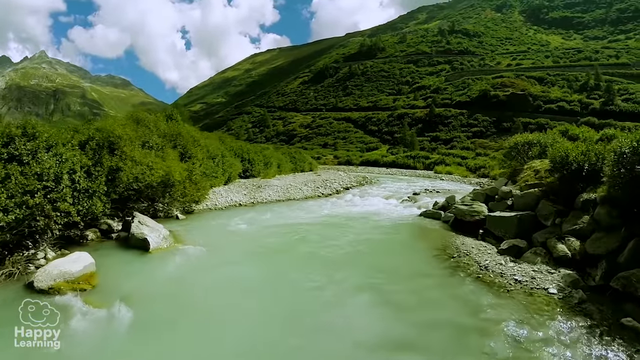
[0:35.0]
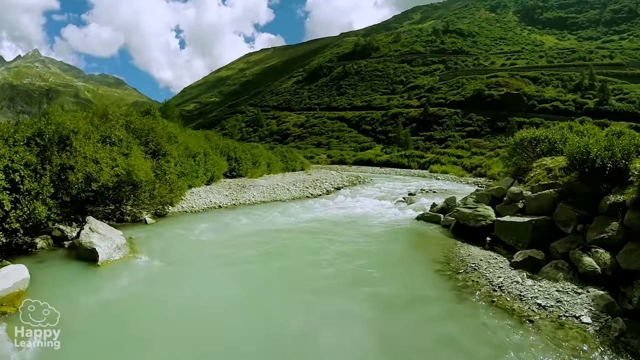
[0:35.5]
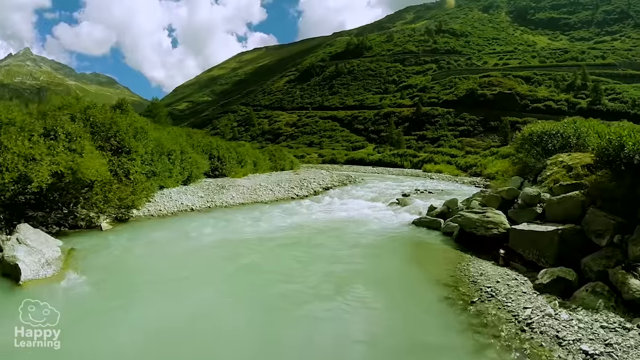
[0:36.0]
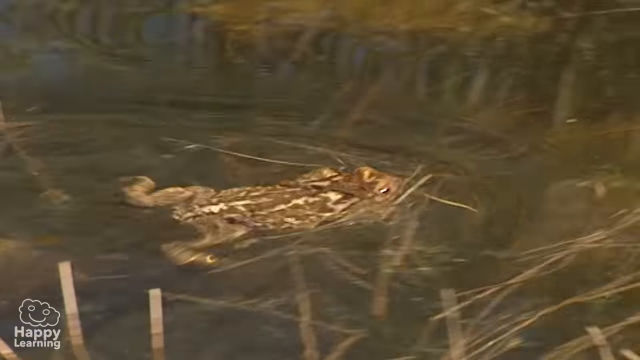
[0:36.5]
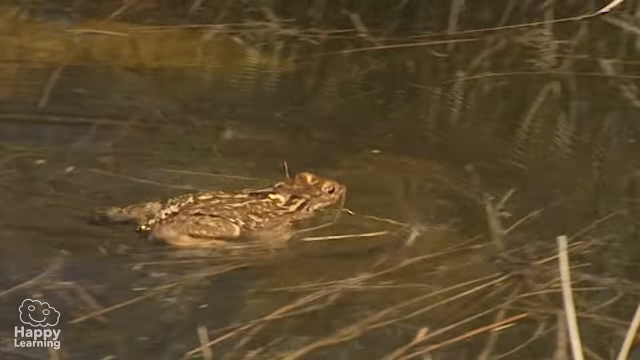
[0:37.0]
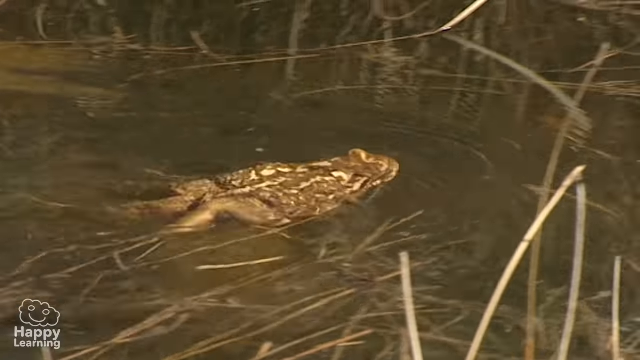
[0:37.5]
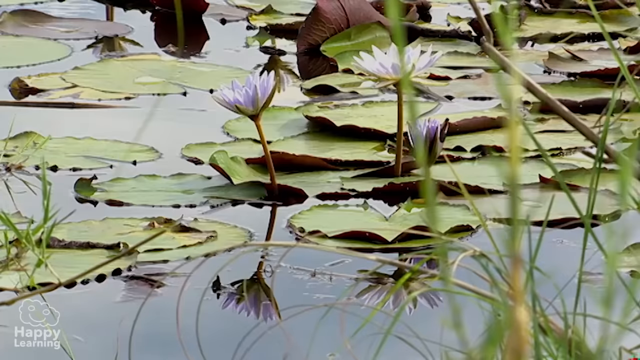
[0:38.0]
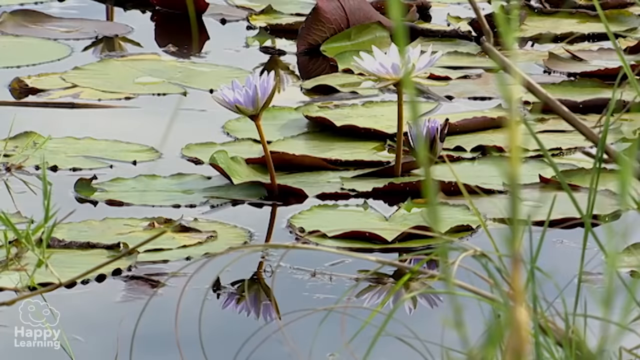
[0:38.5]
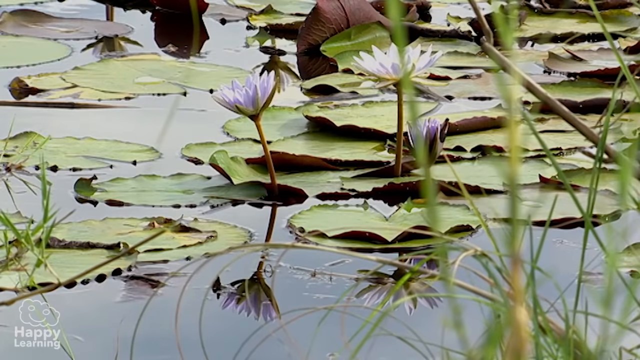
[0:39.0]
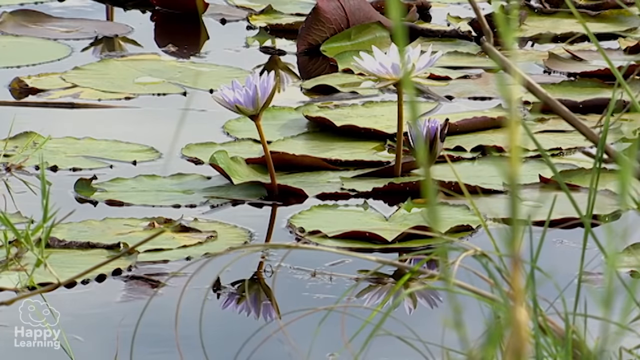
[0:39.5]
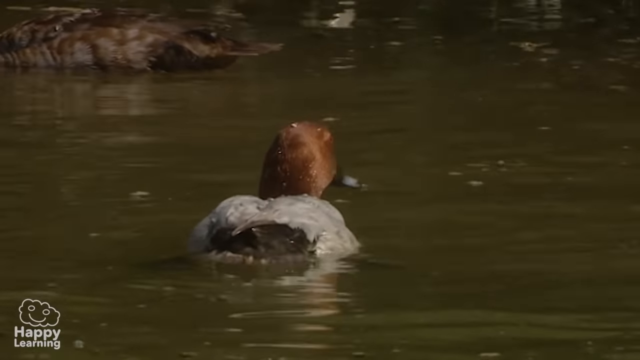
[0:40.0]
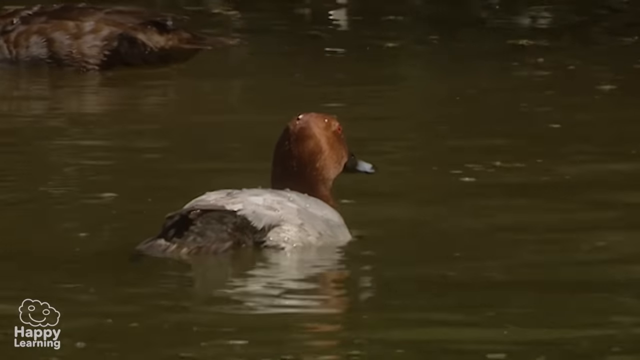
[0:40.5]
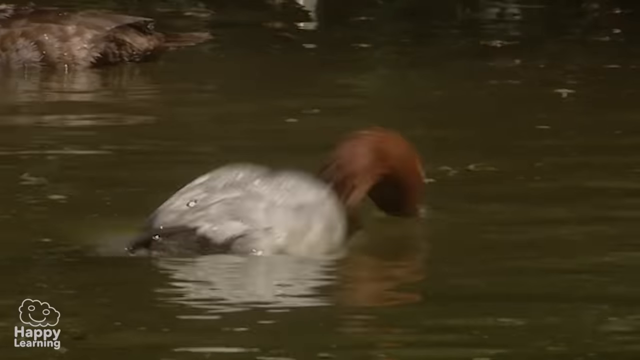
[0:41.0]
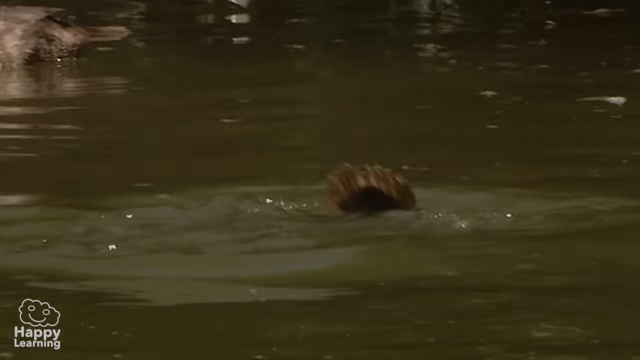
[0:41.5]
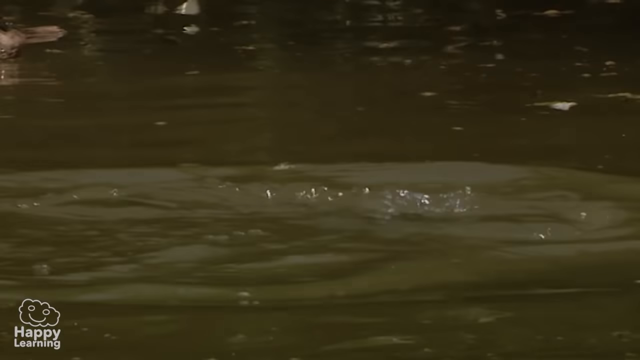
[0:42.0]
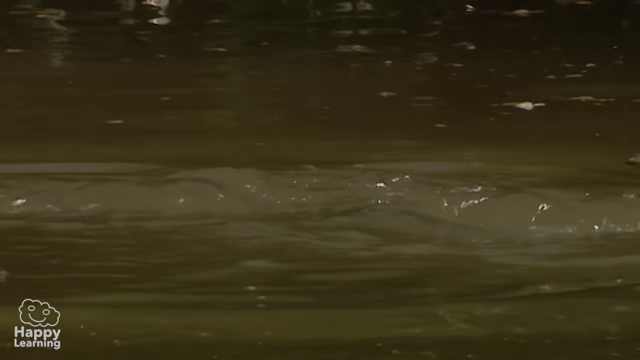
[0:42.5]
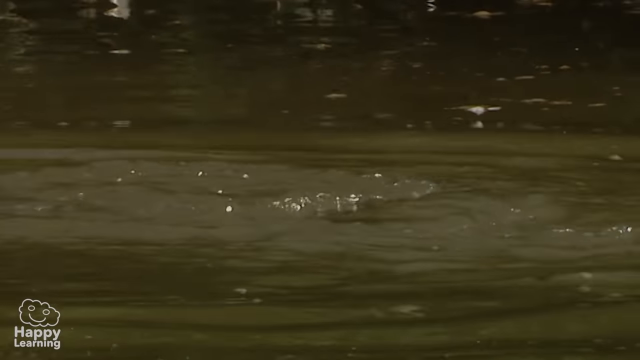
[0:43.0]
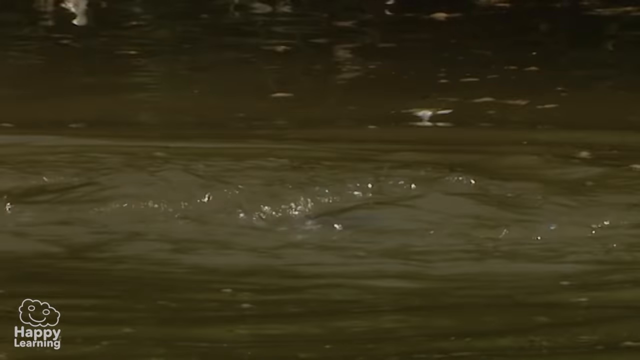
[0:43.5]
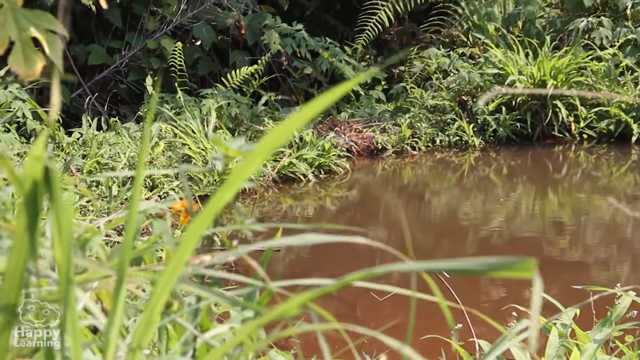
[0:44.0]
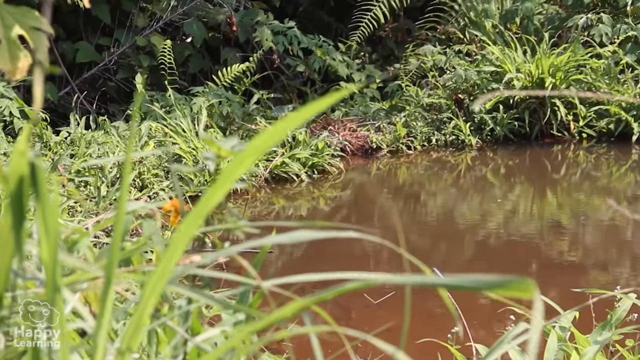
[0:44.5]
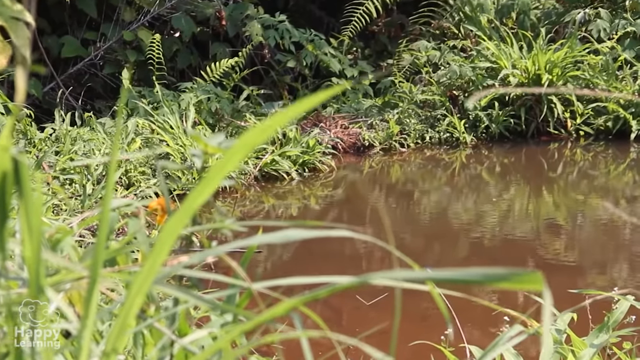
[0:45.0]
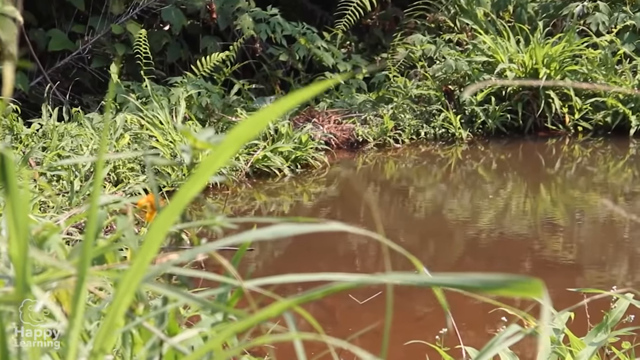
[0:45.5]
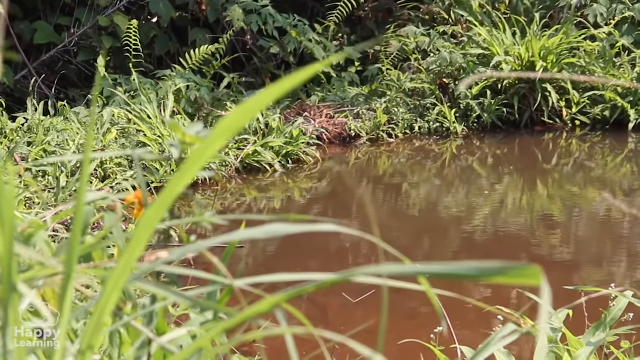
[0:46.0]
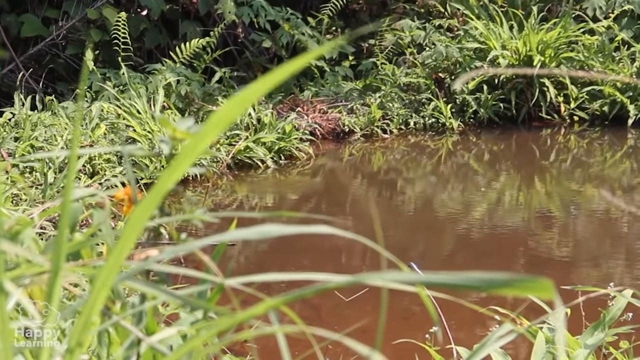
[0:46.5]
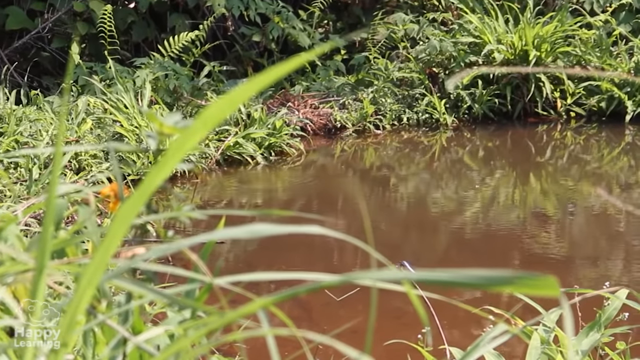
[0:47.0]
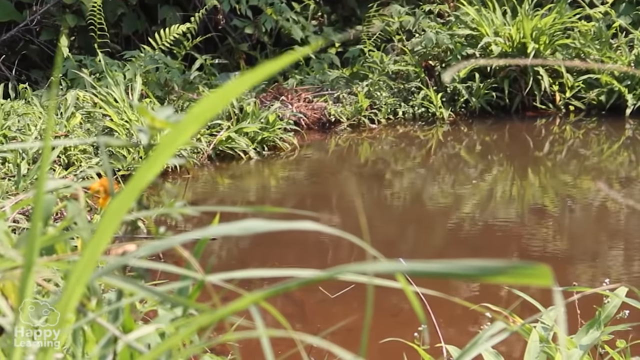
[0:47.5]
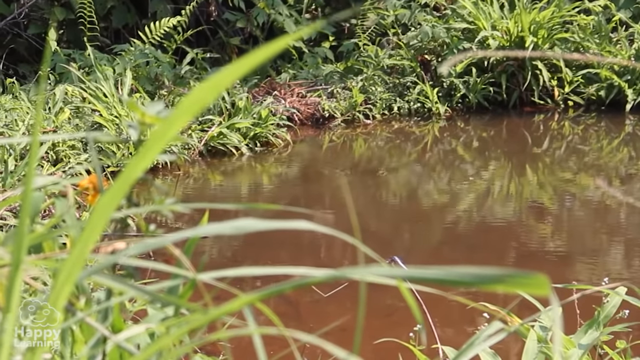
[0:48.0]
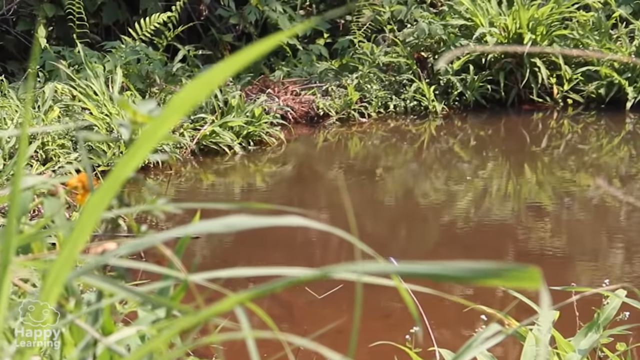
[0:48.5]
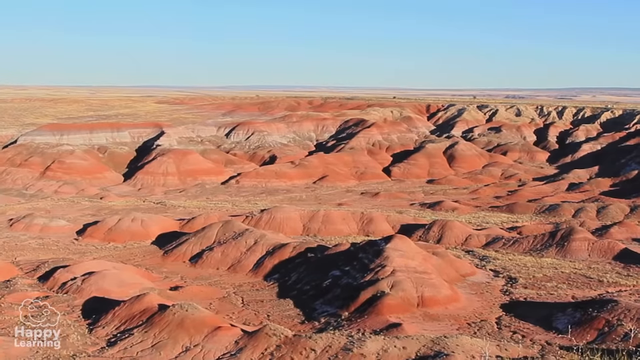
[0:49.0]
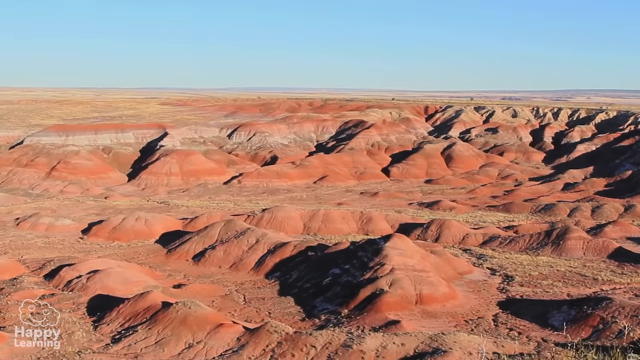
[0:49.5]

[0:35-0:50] A green hill and a river winding through green trees and rocks are shown, and the camera follows the river as it turns towards the green mountain. The scene moves to a pond with a frog swimming in it, with lots of small branches sticking out of the water around the frog. Next is a pond with lily pads and flowers poking above the water, followed by another shot of water with a duck swimming on the surface that then dives beneath the water. Another shot shows a pond of still water surrounded by grasses and a yellow flower. Finally, red hills roll across the screen, with bands of white cutting through the red of the hills.